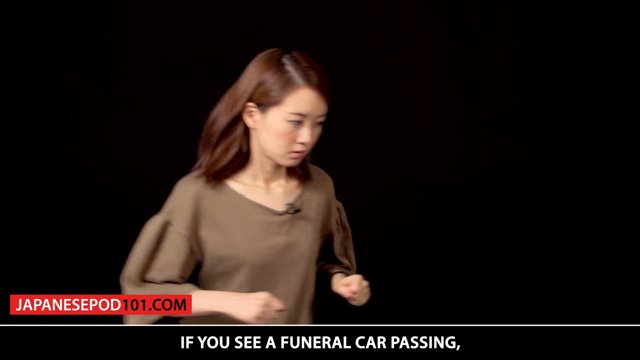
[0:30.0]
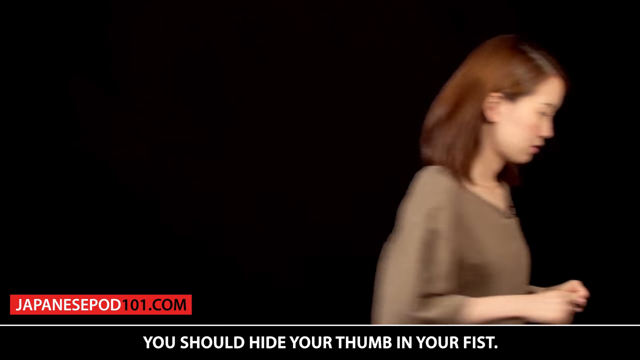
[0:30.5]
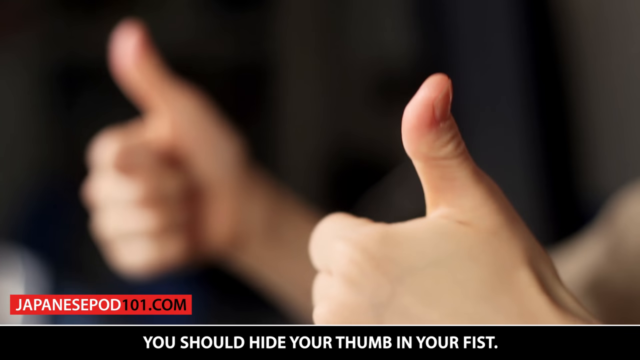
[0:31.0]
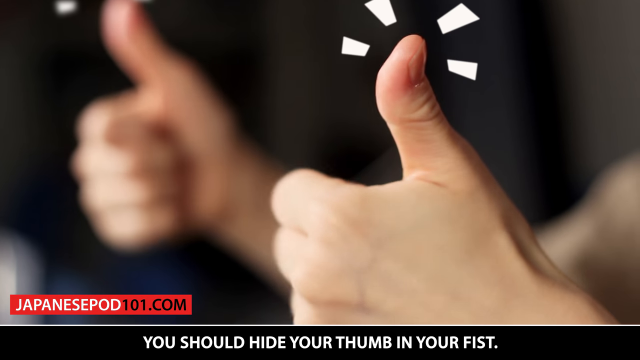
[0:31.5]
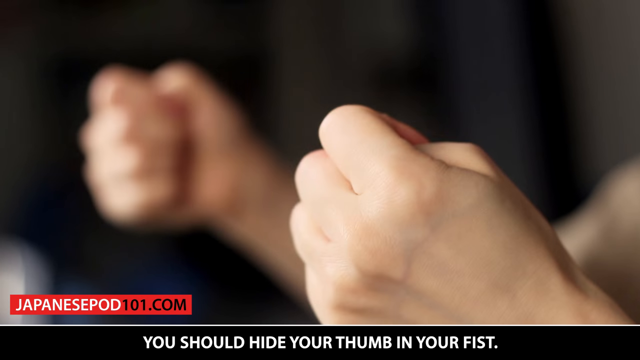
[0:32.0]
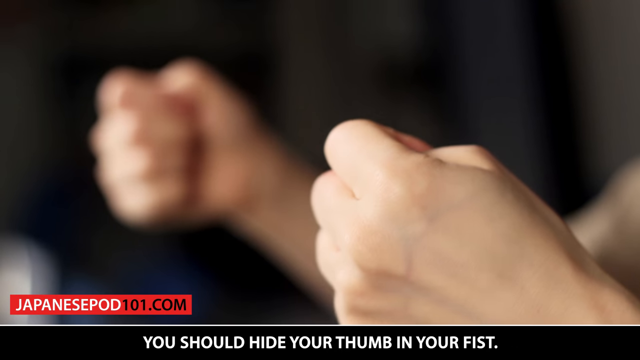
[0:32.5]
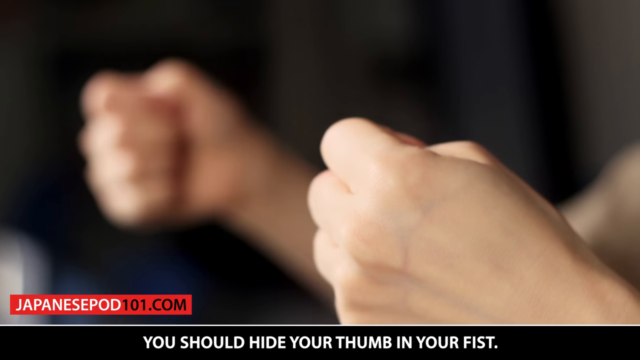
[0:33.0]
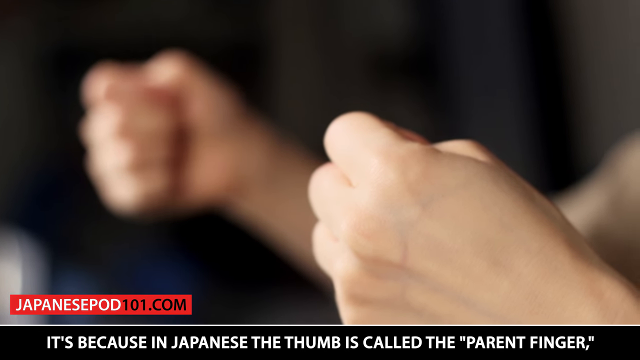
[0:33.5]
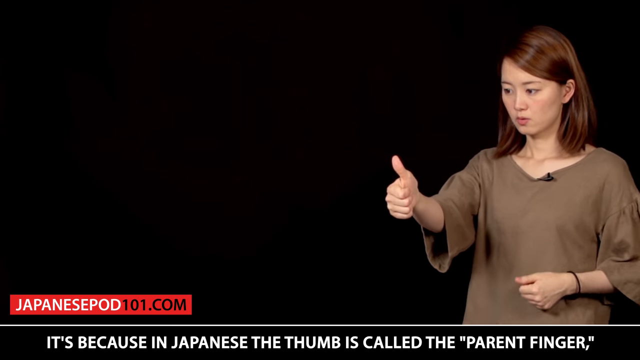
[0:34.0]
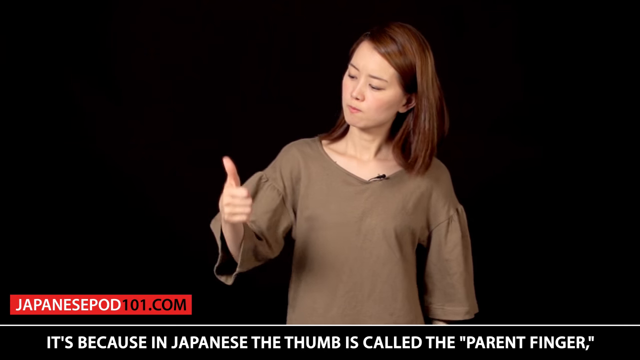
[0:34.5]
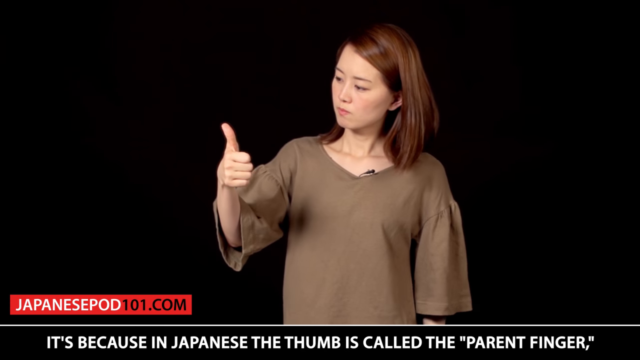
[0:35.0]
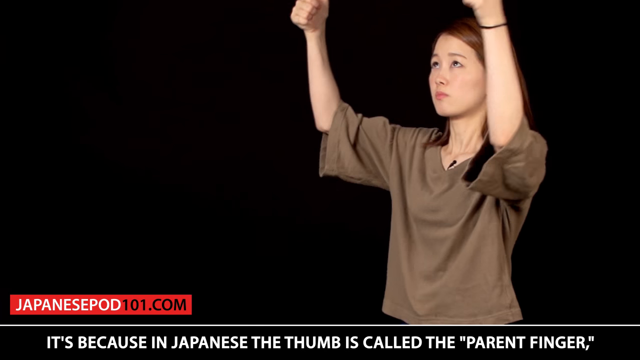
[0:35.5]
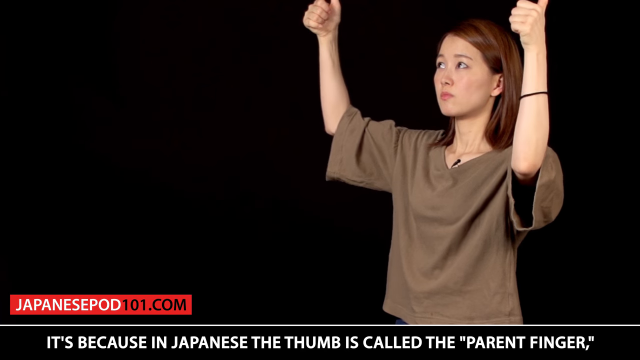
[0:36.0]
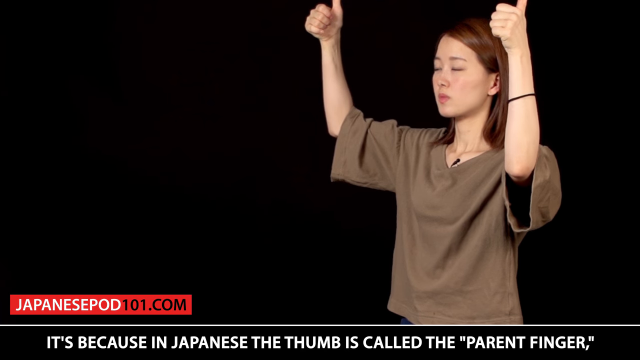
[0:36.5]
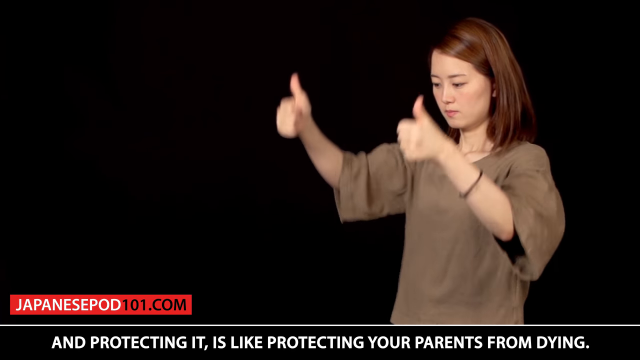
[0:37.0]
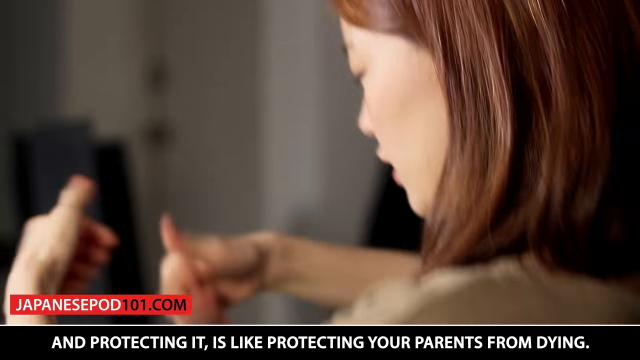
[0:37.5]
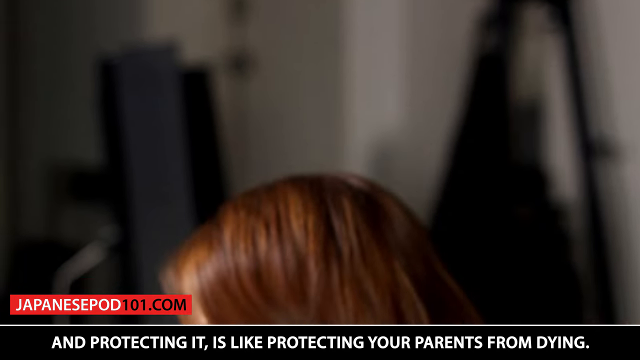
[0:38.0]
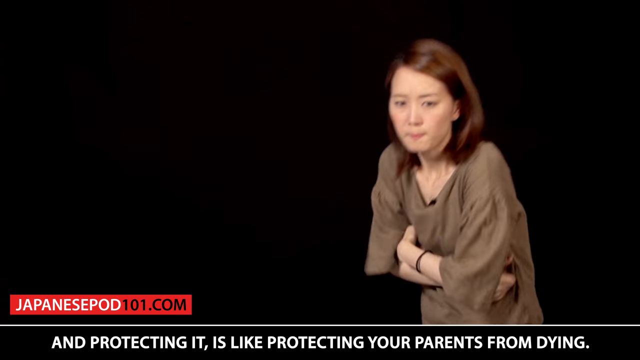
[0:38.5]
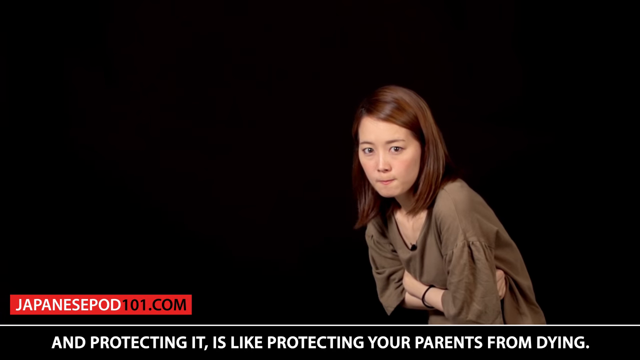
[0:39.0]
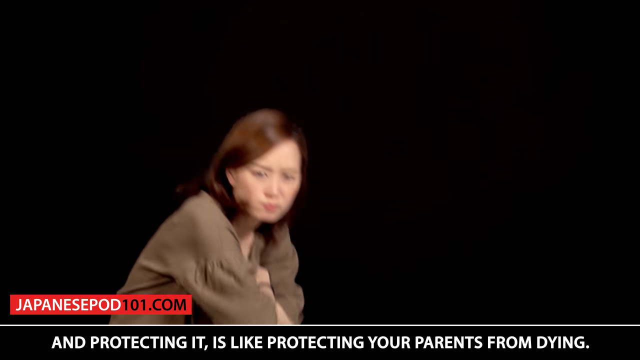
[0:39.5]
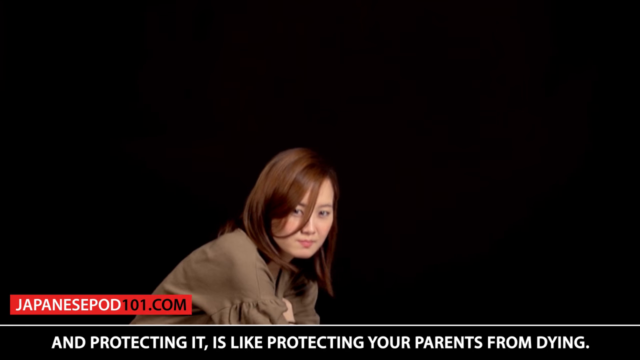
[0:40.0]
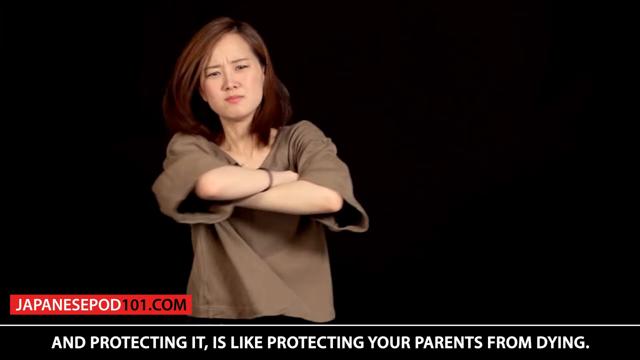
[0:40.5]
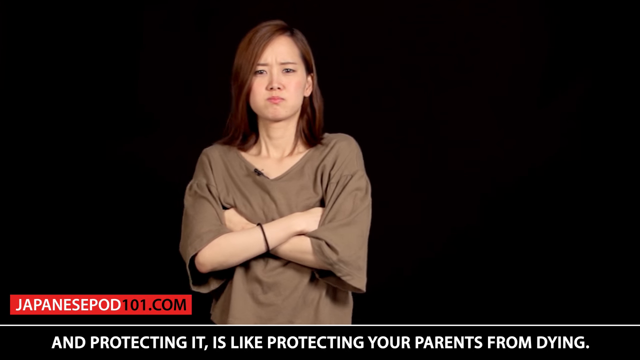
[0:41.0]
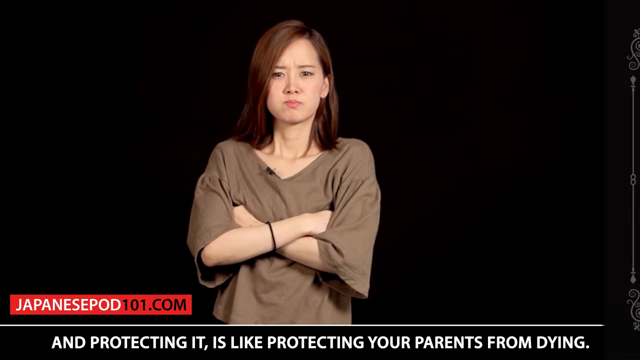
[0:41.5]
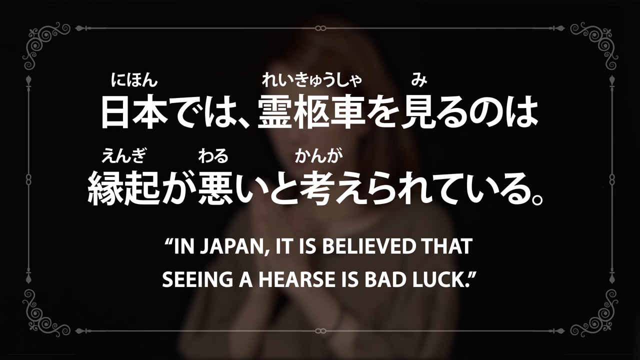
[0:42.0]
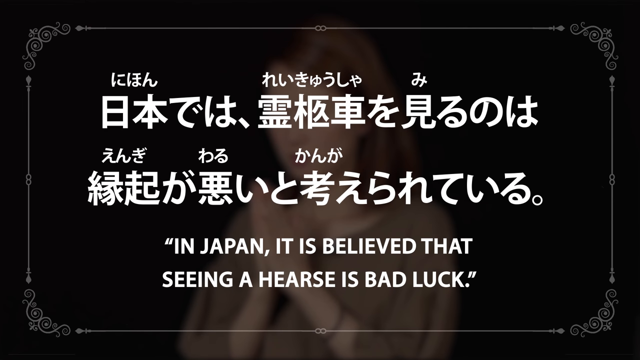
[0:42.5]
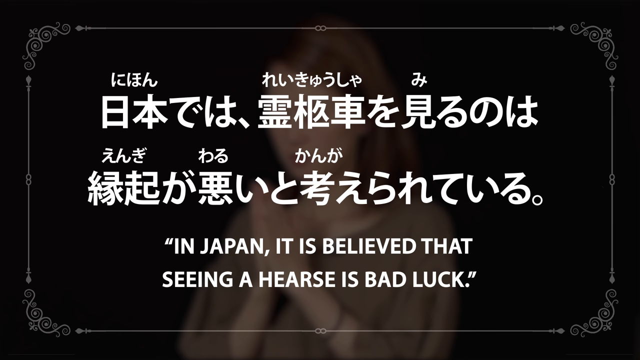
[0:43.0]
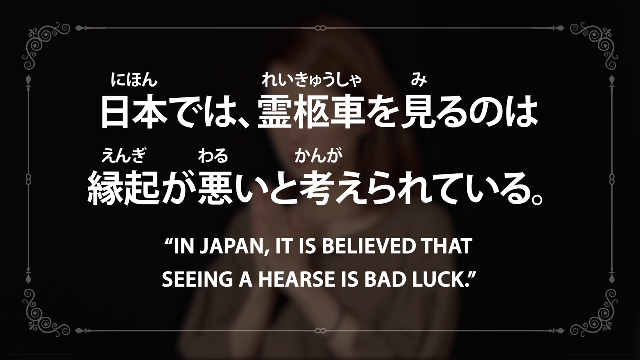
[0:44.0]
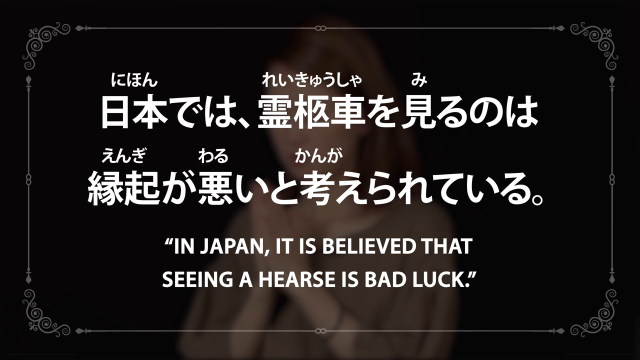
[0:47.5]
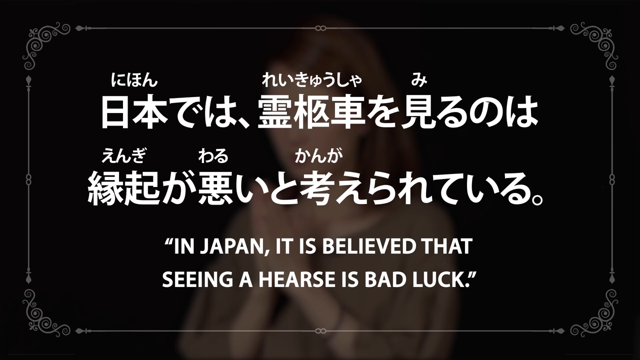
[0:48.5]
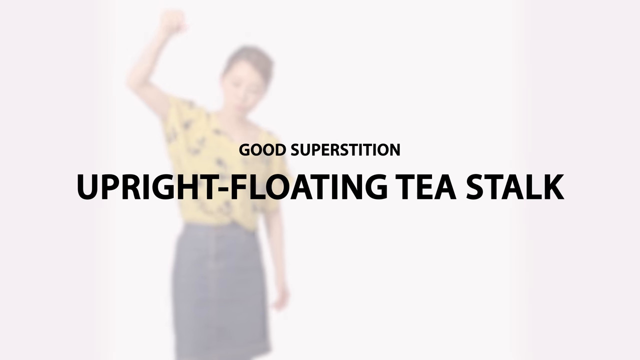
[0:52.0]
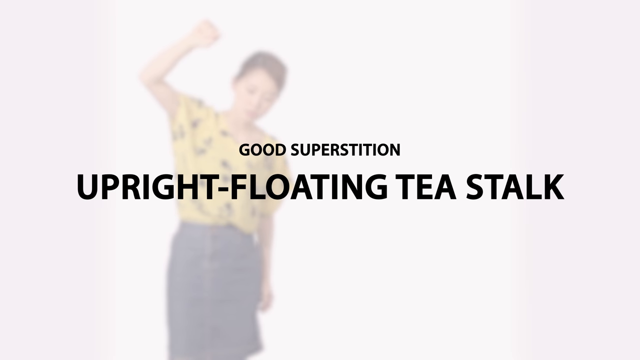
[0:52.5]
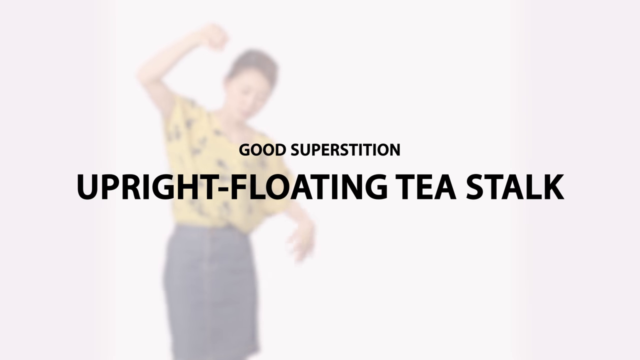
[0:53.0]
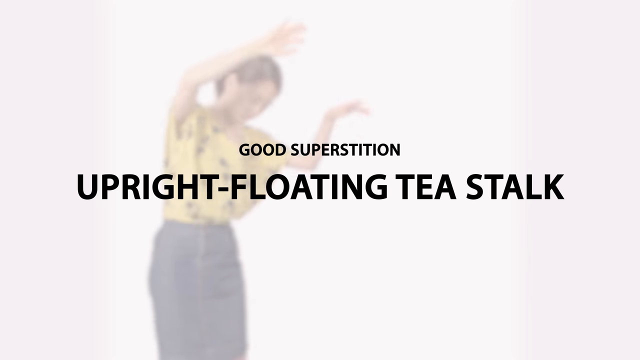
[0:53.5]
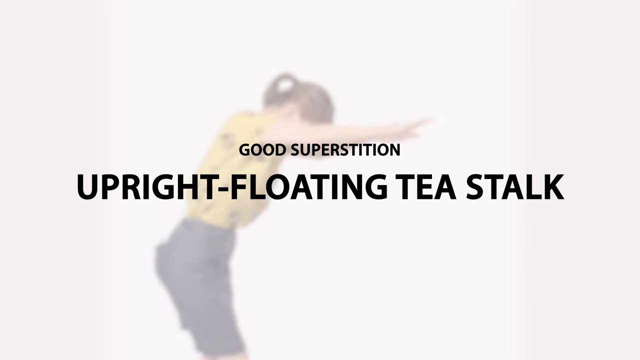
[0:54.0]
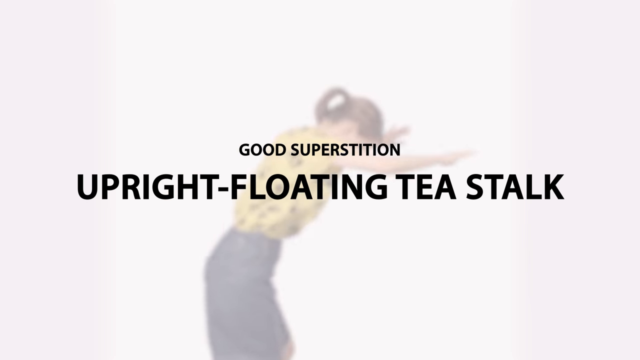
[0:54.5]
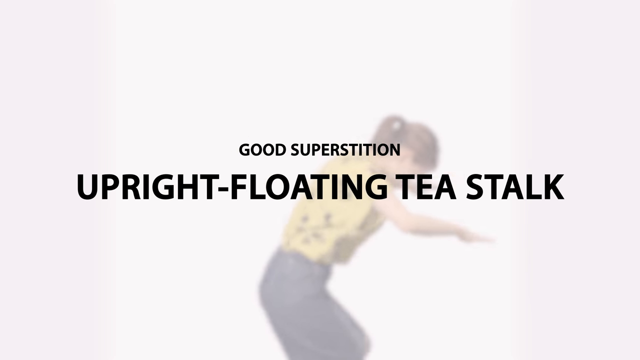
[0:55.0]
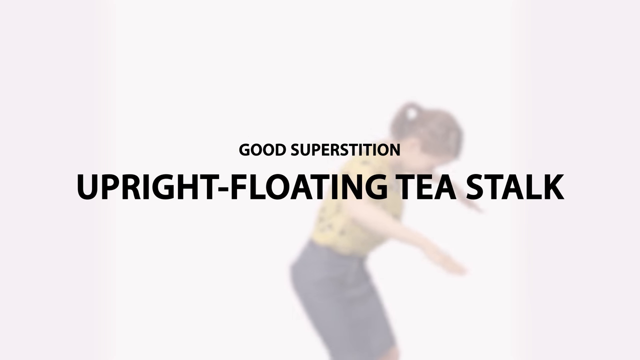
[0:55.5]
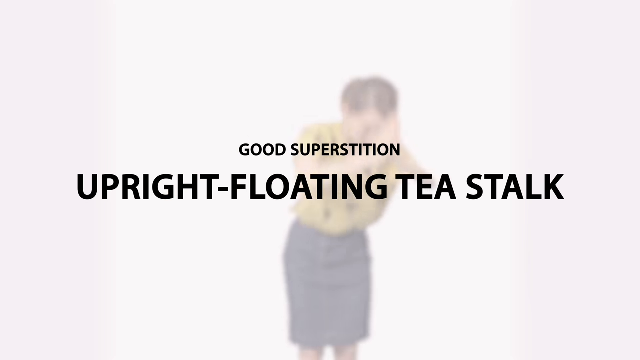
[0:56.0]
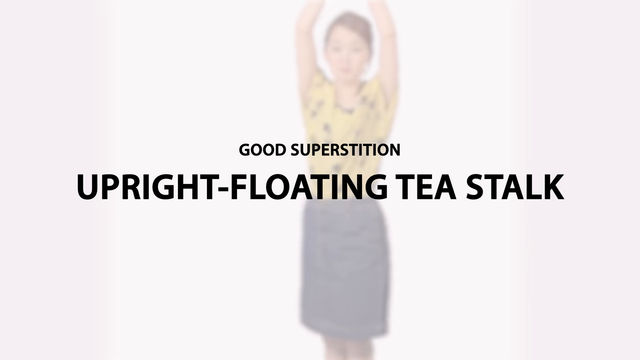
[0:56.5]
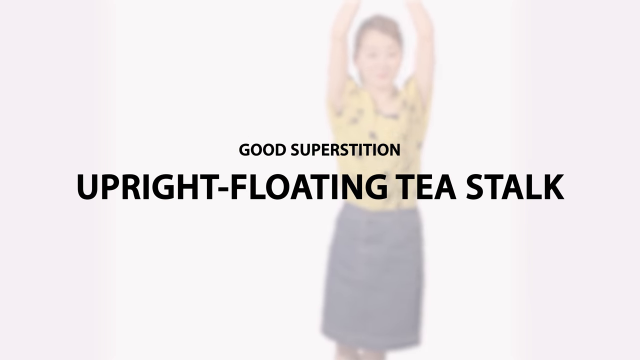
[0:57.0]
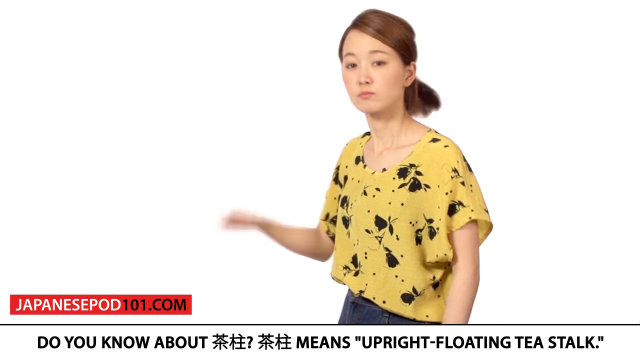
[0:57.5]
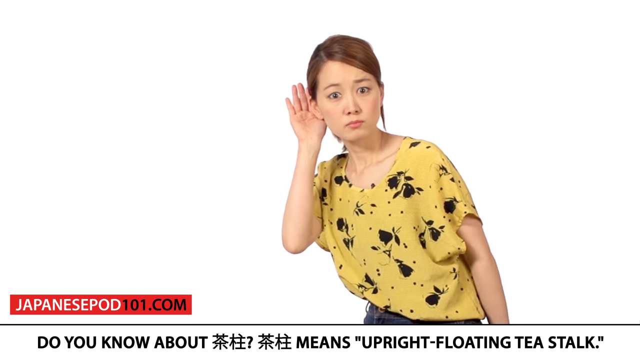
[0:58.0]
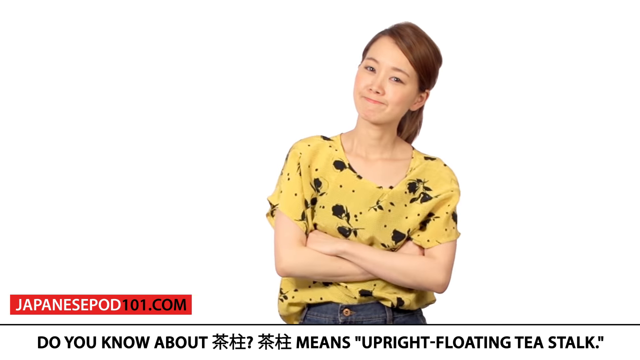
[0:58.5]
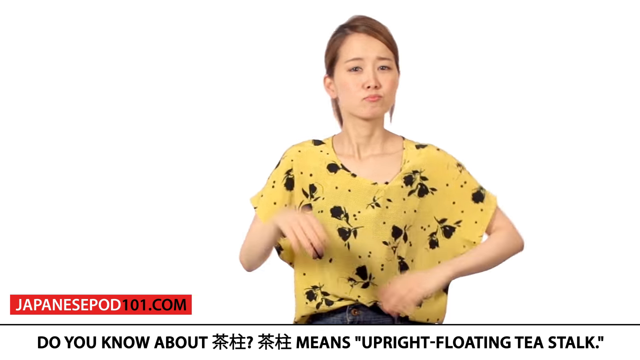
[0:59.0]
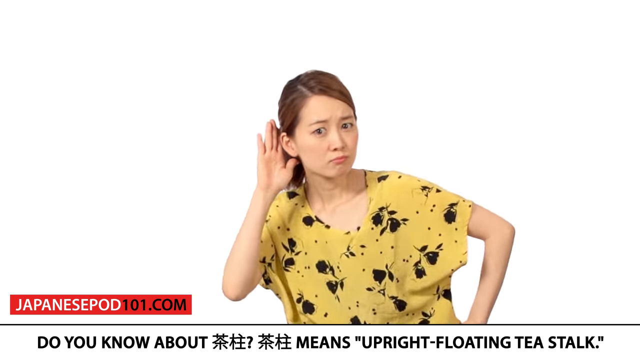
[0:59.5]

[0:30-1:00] The woman runs in the dark room. A strongly clenched fist is shown, and text reads "because in Japanese the thumb is called the parent's finger". The woman looks at her thumb and her other fingers and makes various gestures. Then text in Japanese with an English translation appears, beginning "In Japan, it is believed that seeing", and the woman apparently explains it. Another slide follows with a white background and text reading "superstition upright floating tea stalk". The woman, now in a yellow t-shirt with flowers and jeans, dances in the background.